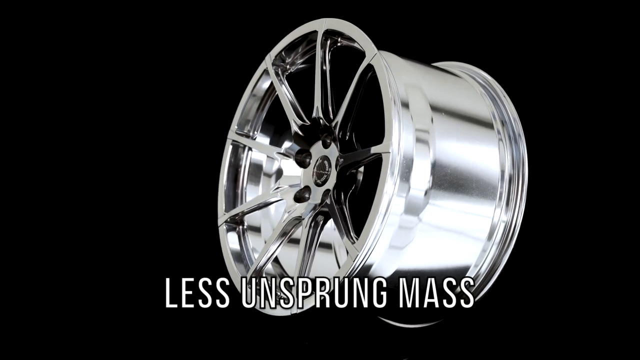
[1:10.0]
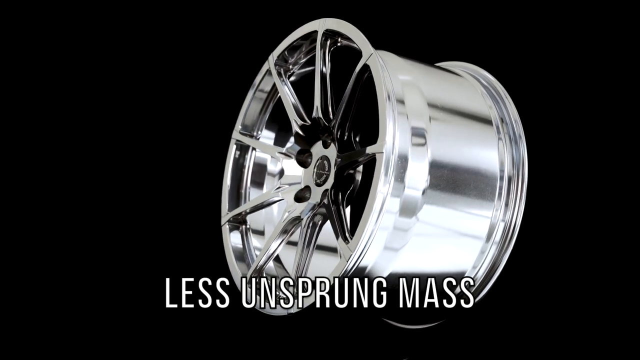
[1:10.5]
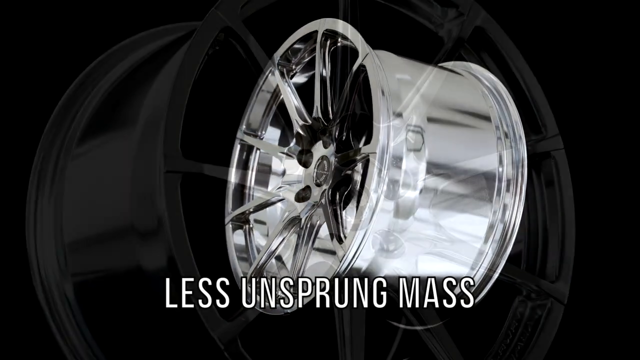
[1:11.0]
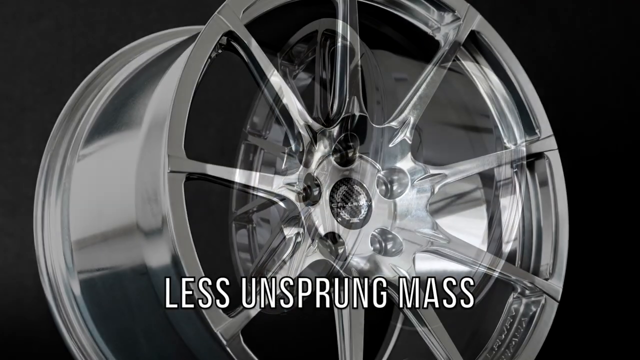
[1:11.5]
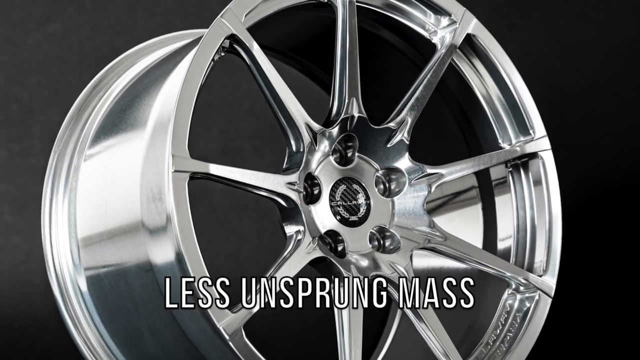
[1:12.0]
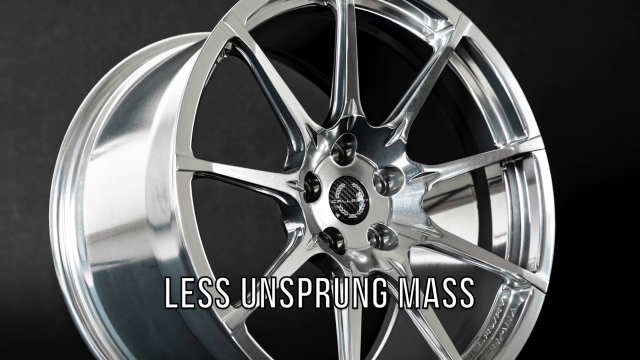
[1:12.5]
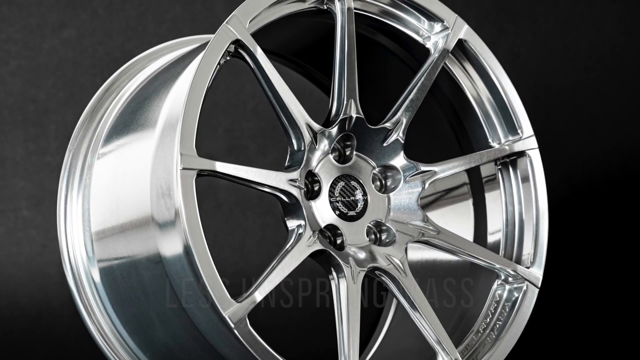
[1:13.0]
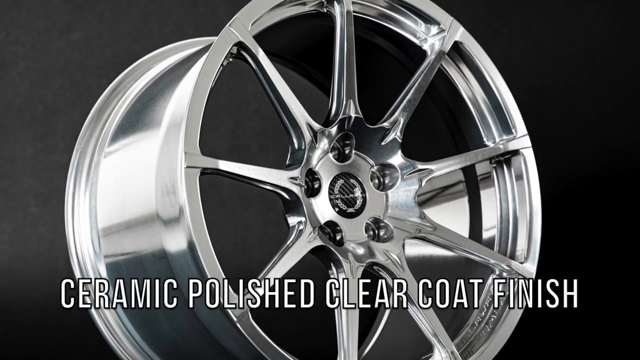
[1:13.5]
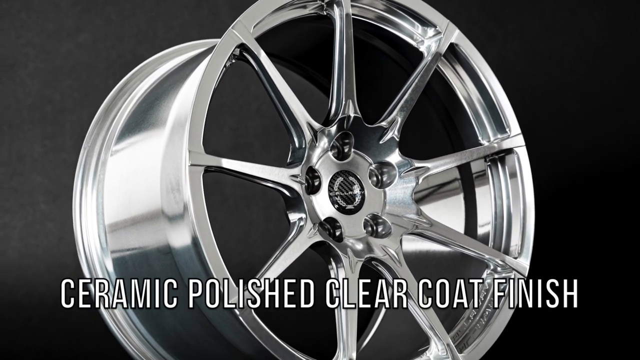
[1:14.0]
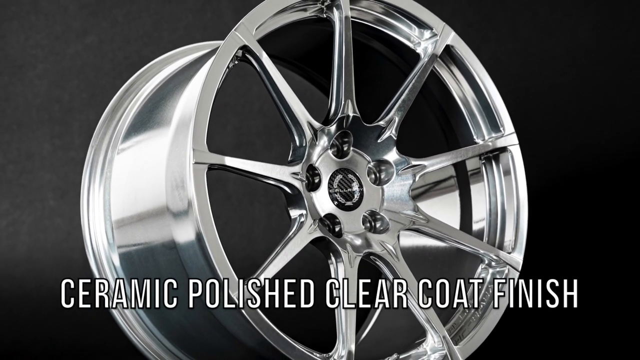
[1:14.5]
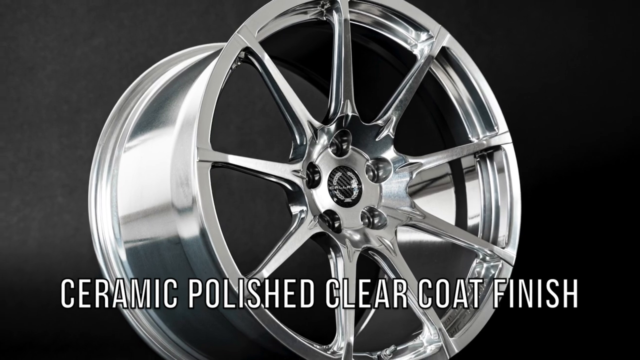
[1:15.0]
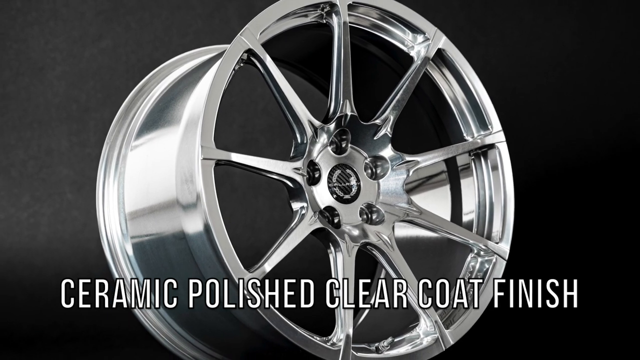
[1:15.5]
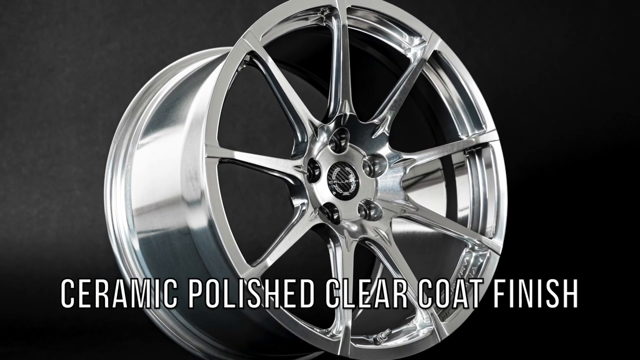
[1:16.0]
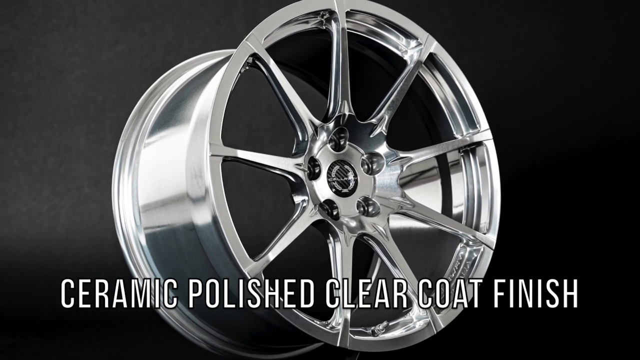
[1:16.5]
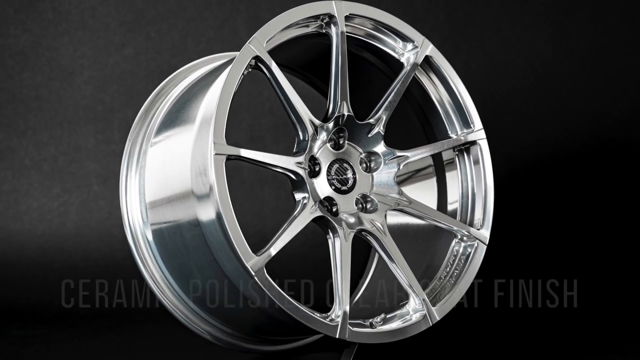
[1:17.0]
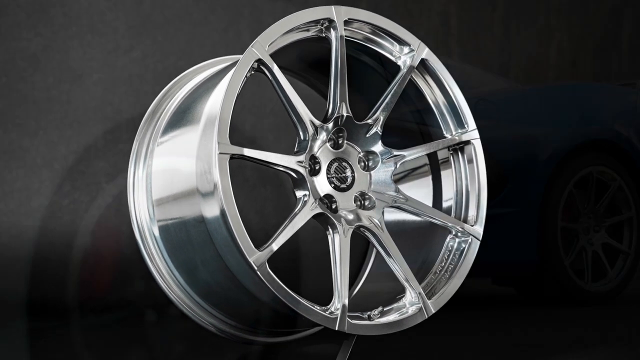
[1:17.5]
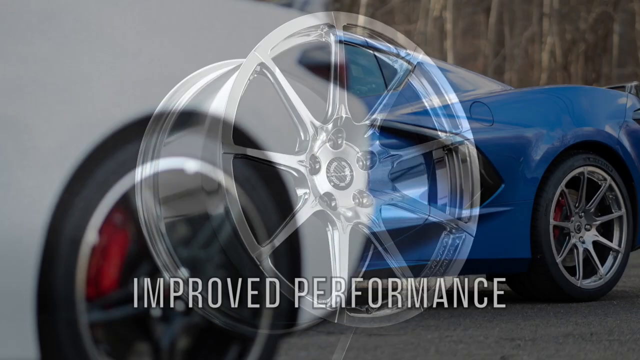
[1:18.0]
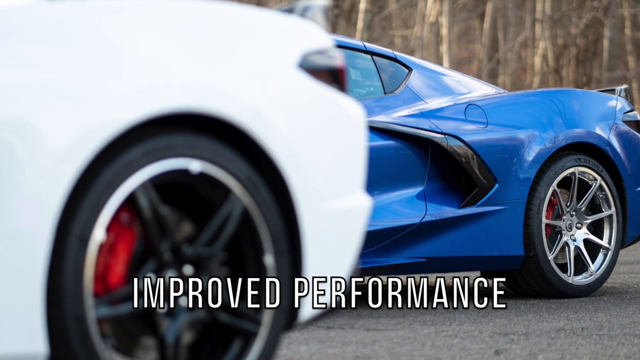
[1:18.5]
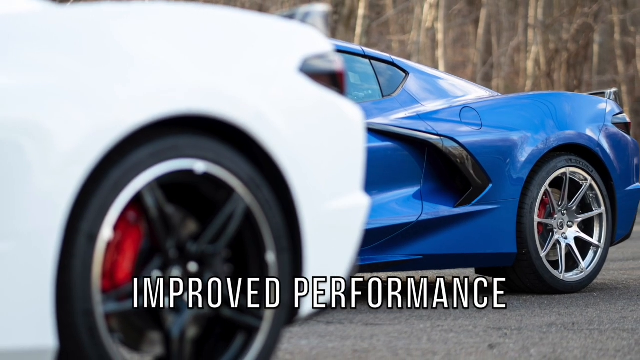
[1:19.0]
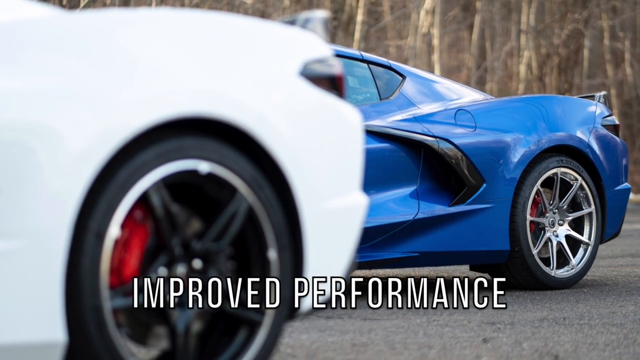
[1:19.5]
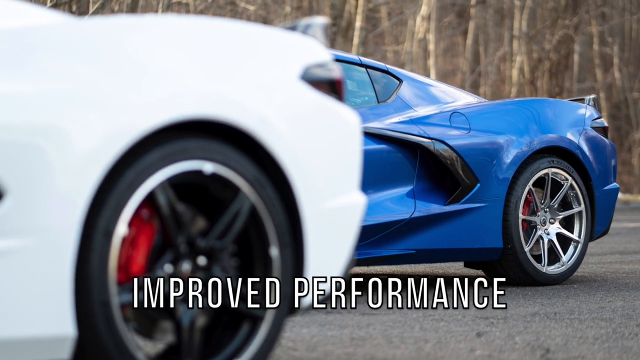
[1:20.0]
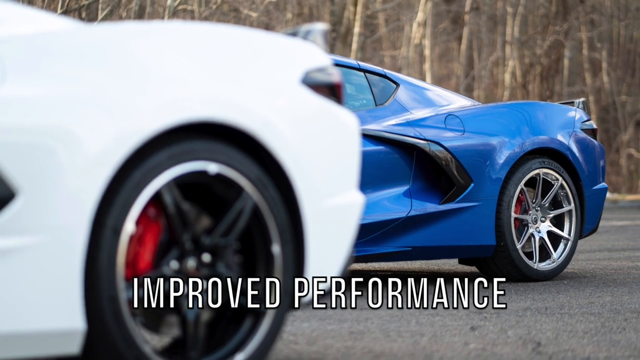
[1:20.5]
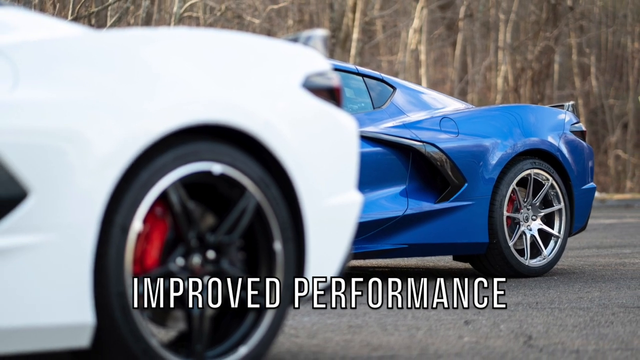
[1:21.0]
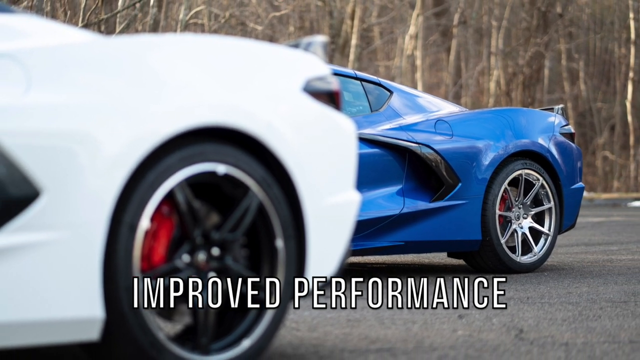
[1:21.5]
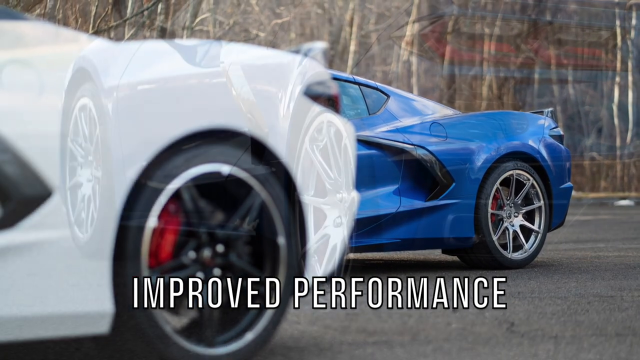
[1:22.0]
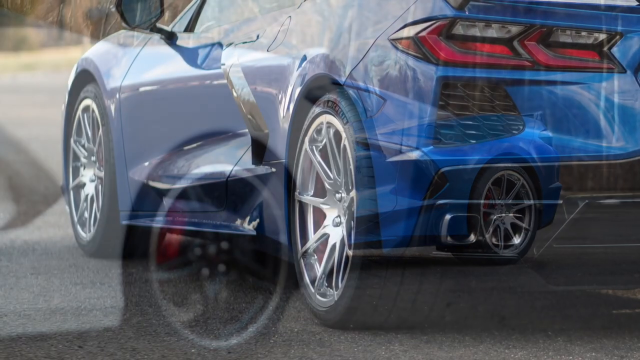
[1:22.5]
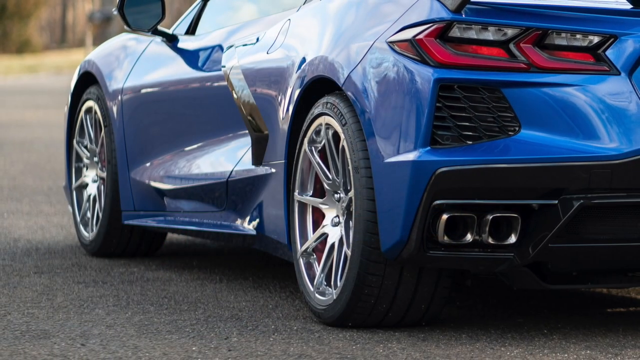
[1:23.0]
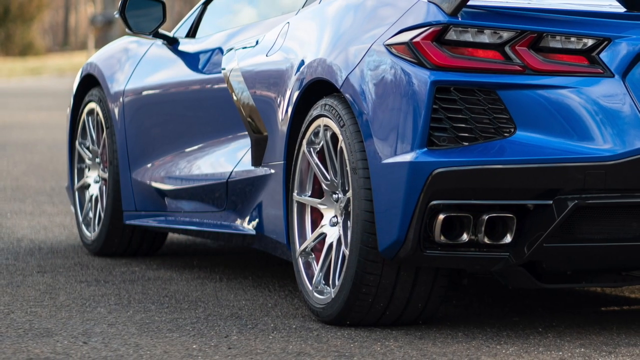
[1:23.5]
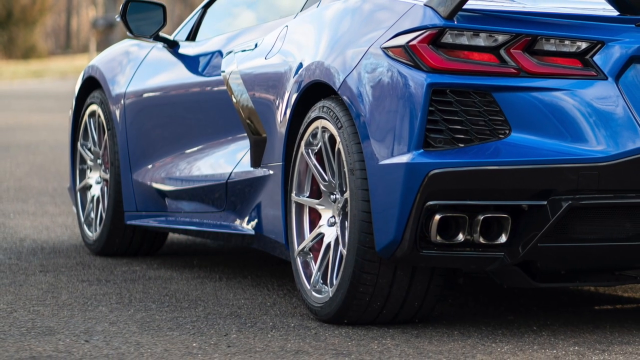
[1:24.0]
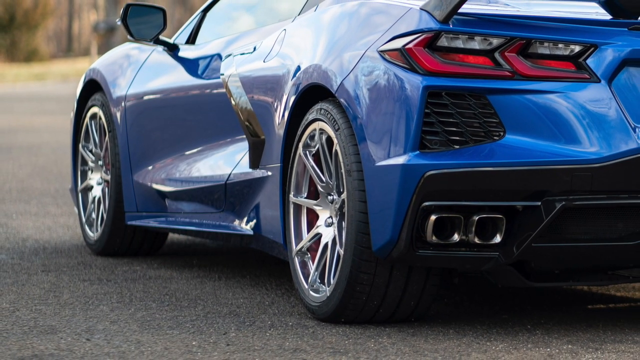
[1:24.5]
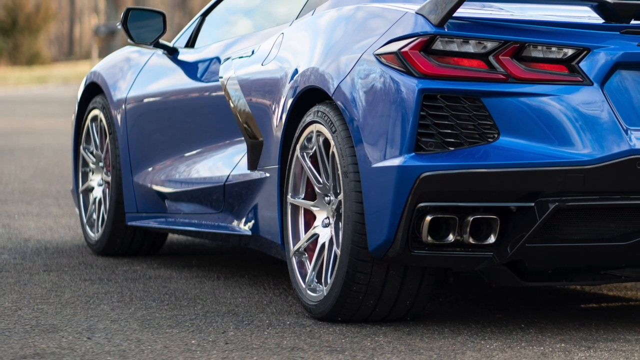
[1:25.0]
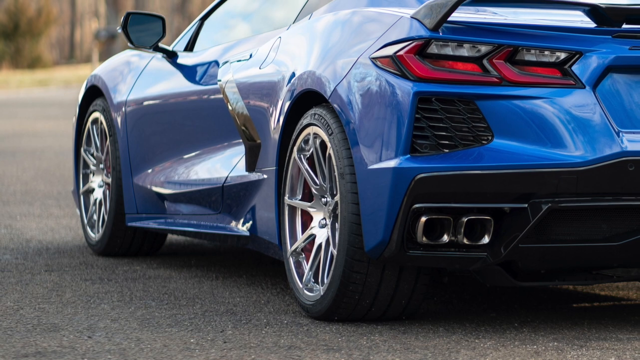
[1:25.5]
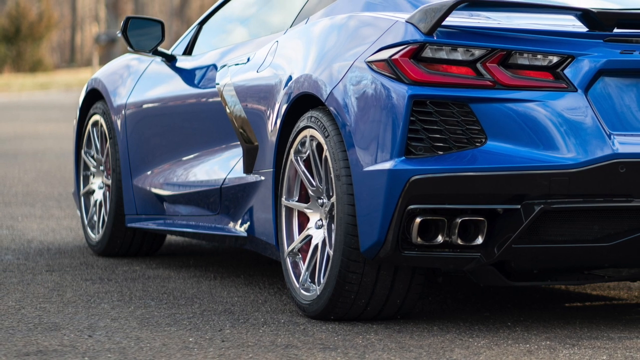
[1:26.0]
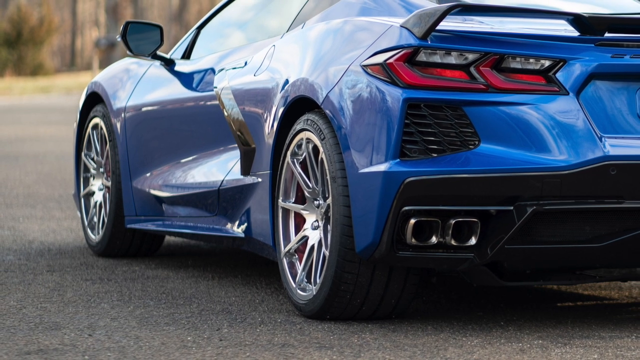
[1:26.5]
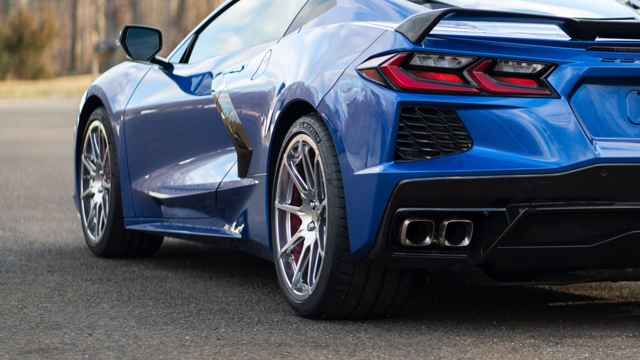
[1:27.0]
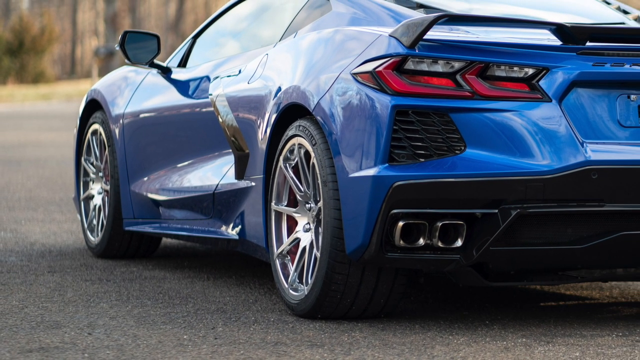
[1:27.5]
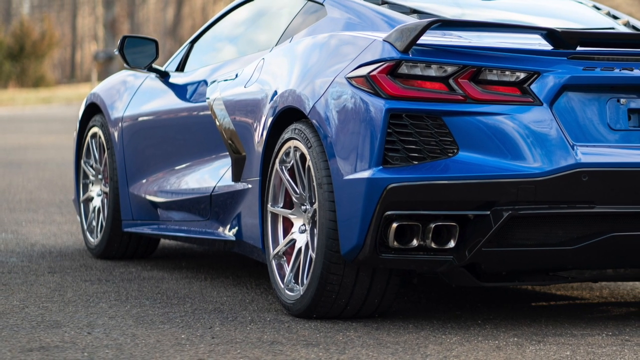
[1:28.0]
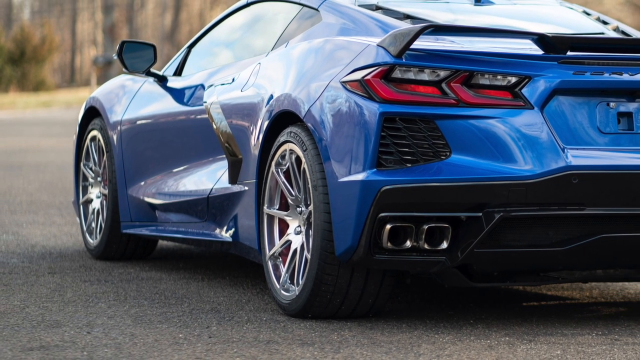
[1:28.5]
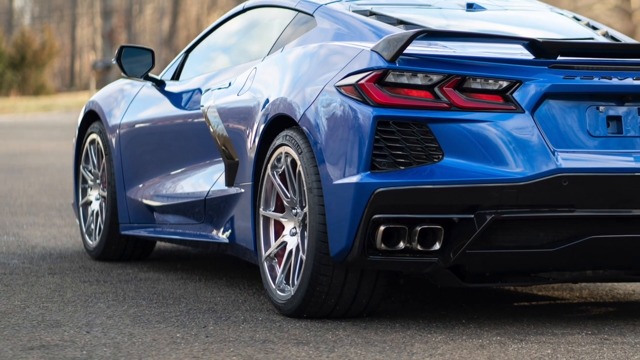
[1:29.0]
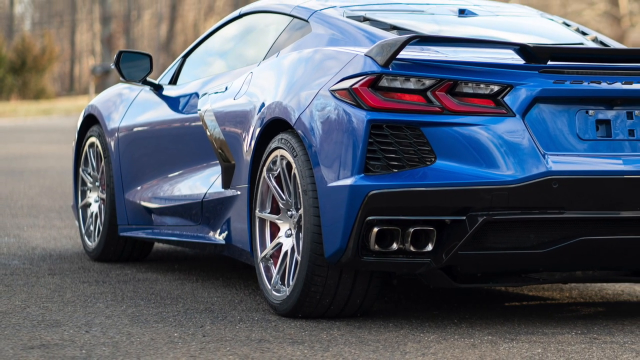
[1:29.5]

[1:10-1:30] A Callaway rim is shown without a tire, with text describing a "ceramic, polished, clear coat finish"; the rim looks silver. The rims are then shown on two newer-model Corvettes: the car in the back is blue with silver rims, and the car in the foreground is white with black rims. Text at the bottom of the screen mentions "improved performance." The next image shows the blue Corvette in full side profile, with the front and back rims mounted with tires. The Callaway logo sits in the center of the rim, around the five lug nut holes. The main rims shown look like highly polished aluminum rims.